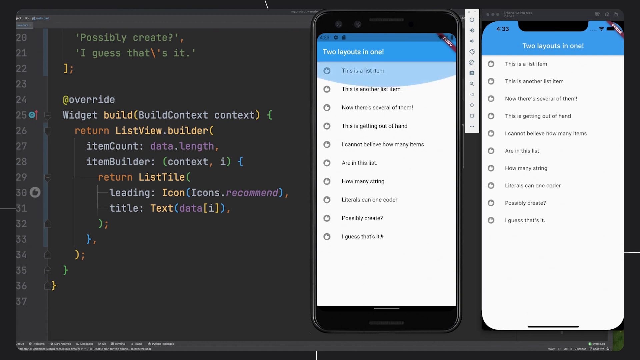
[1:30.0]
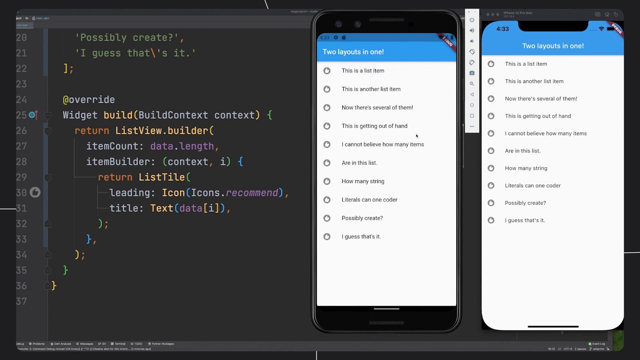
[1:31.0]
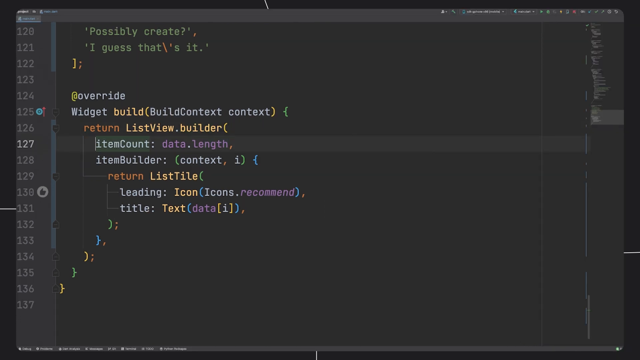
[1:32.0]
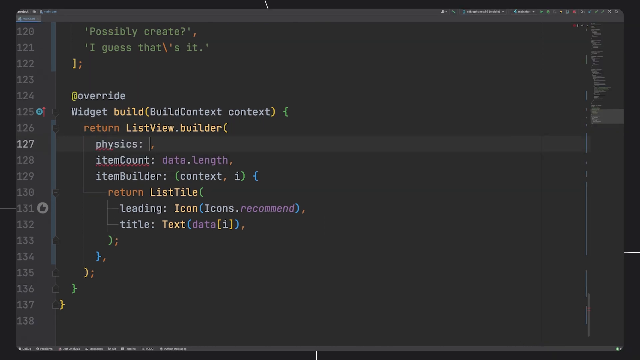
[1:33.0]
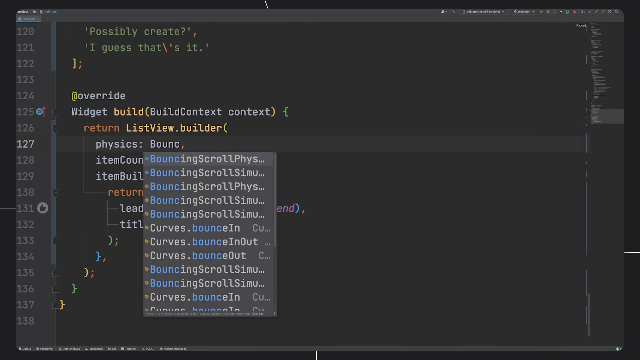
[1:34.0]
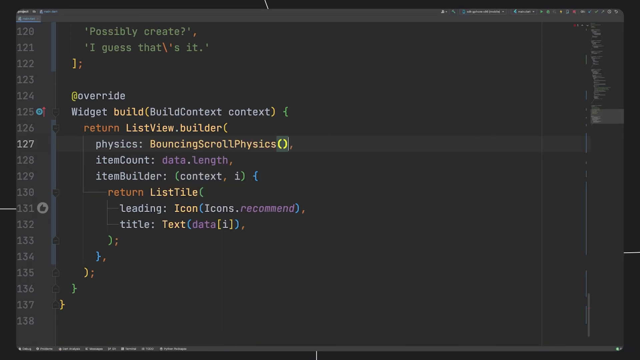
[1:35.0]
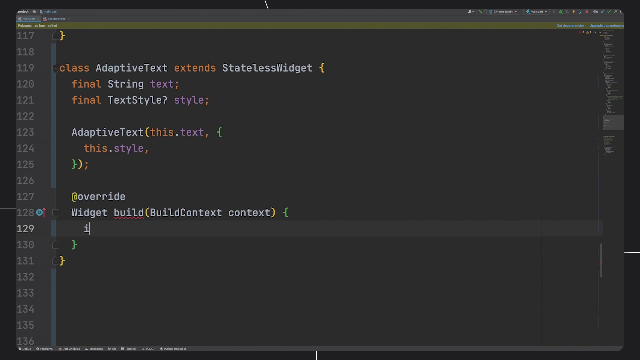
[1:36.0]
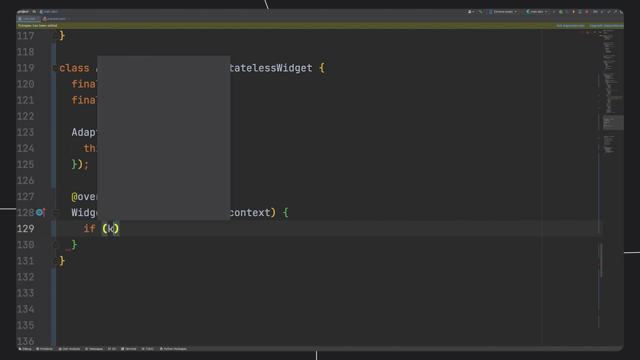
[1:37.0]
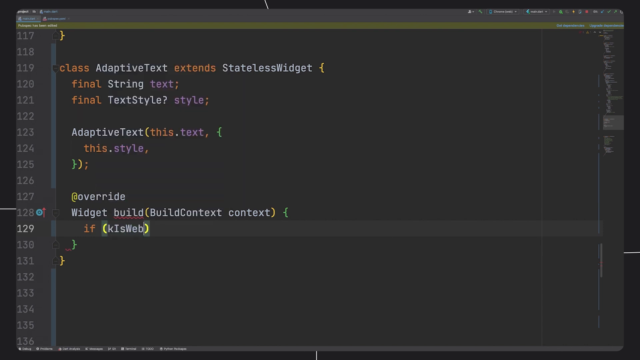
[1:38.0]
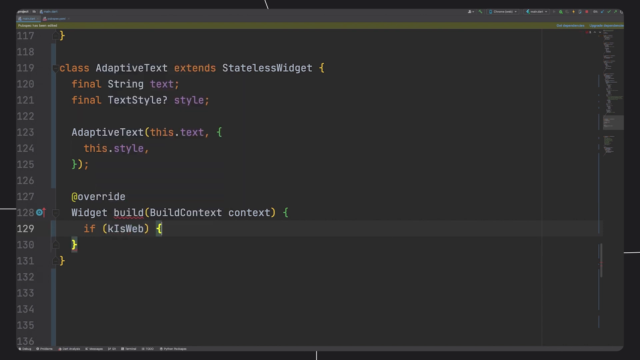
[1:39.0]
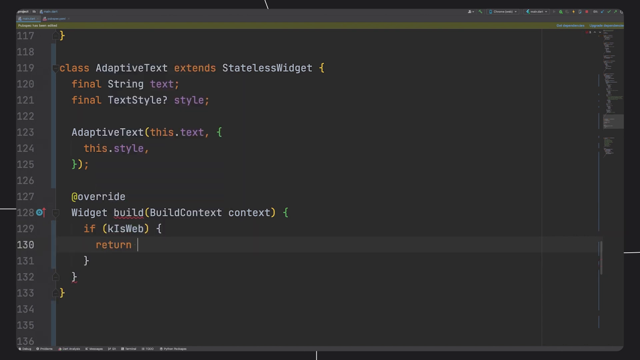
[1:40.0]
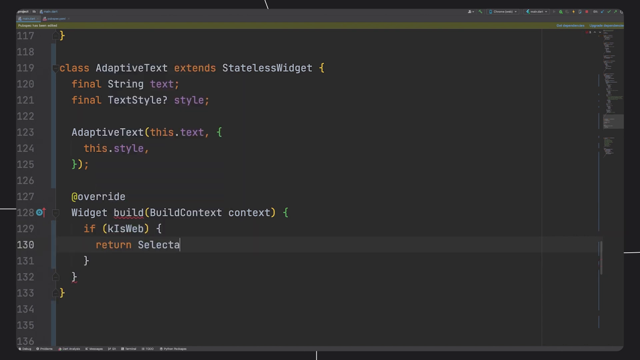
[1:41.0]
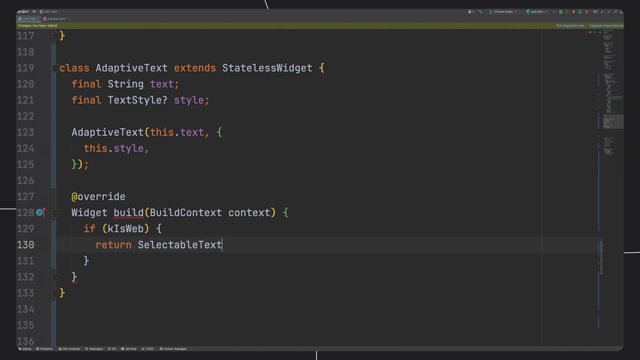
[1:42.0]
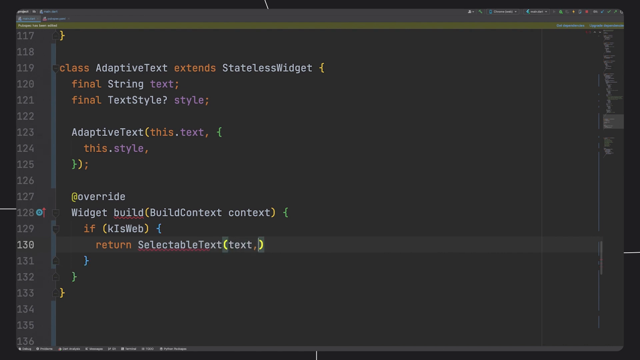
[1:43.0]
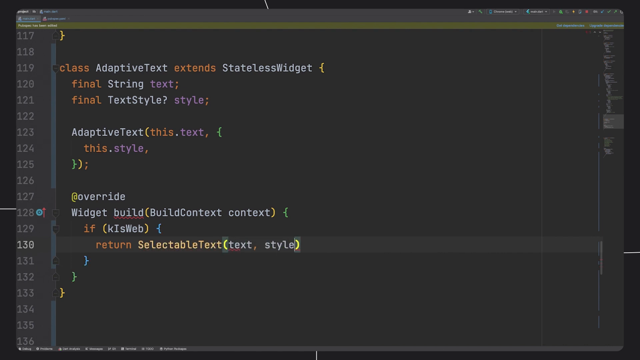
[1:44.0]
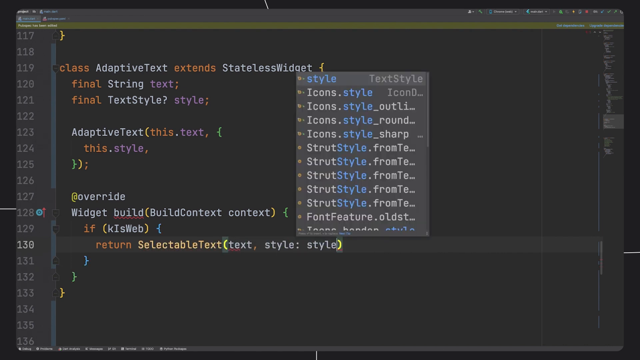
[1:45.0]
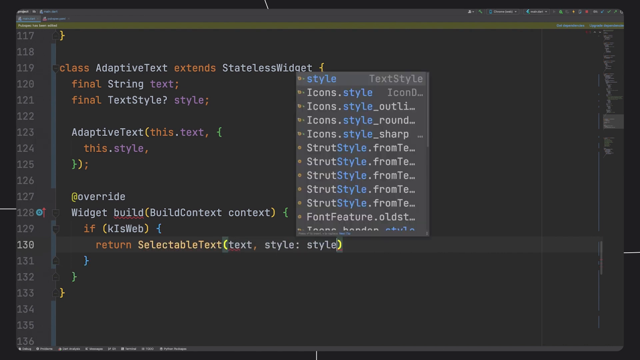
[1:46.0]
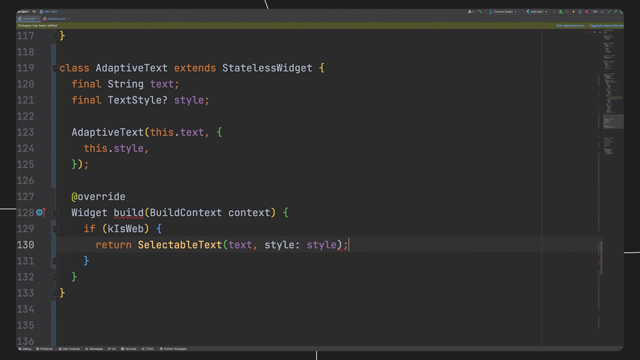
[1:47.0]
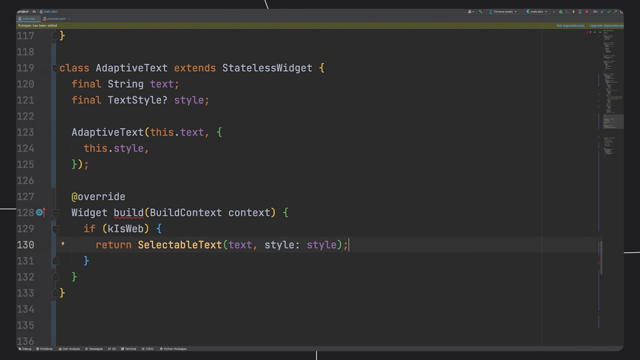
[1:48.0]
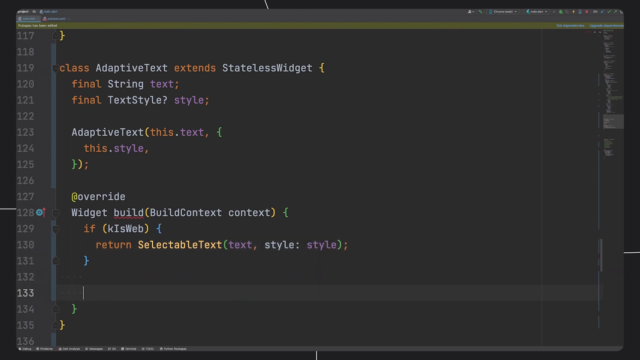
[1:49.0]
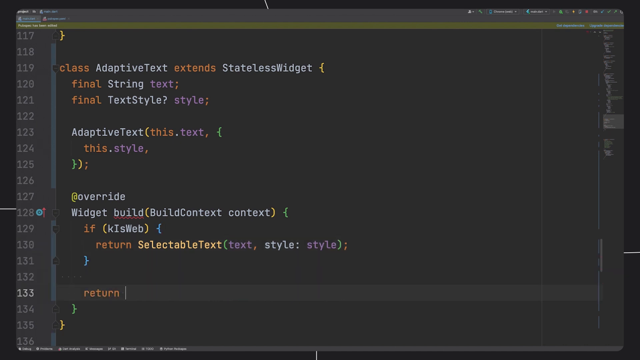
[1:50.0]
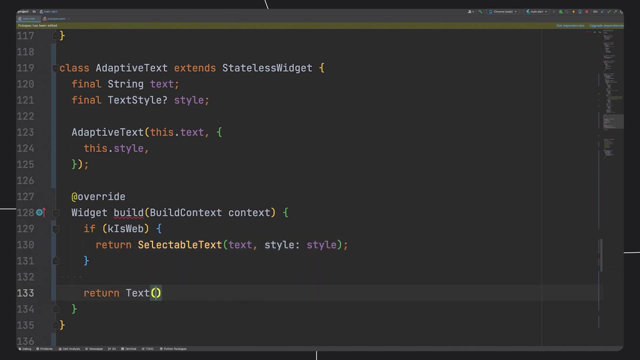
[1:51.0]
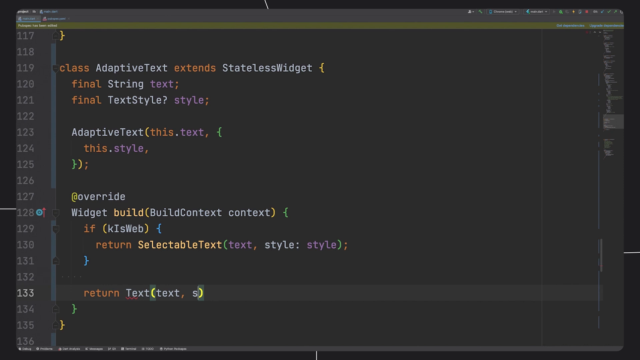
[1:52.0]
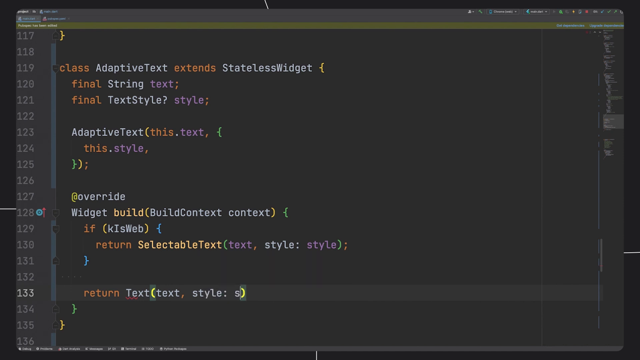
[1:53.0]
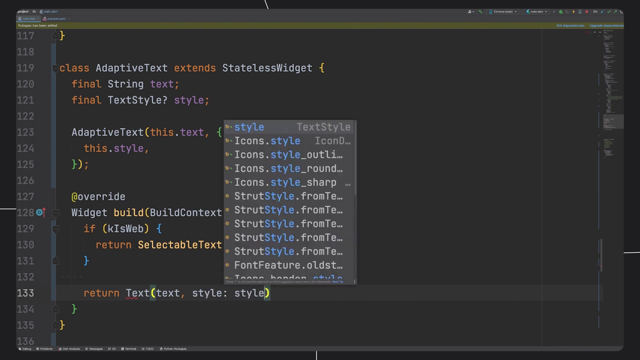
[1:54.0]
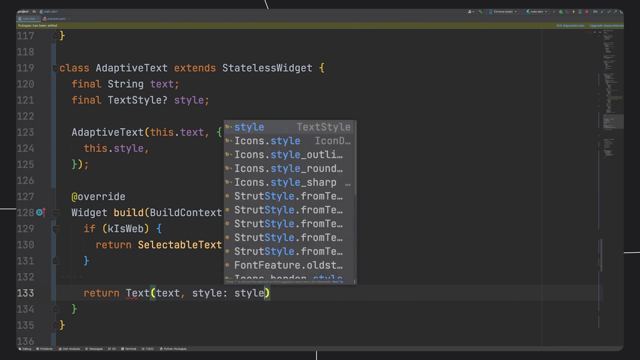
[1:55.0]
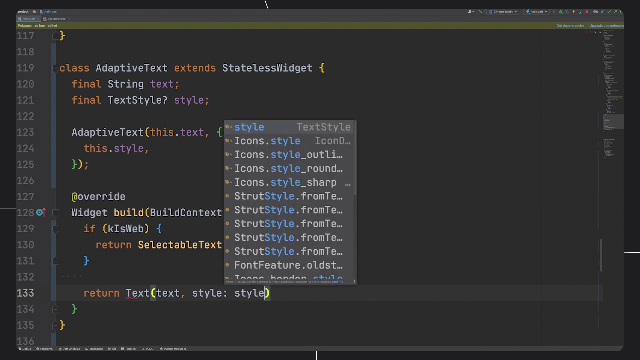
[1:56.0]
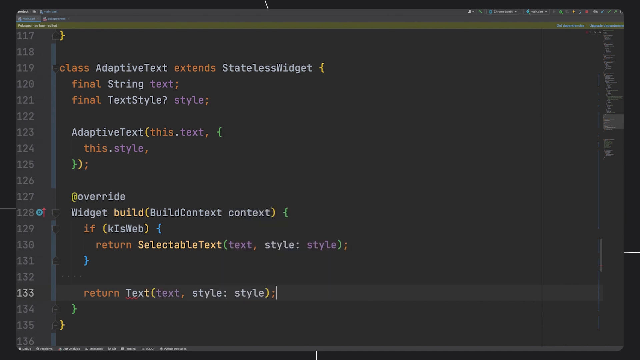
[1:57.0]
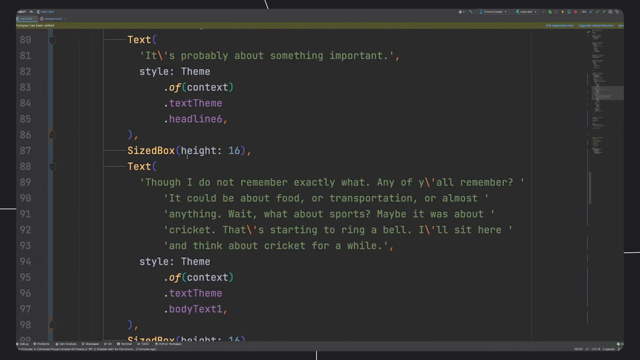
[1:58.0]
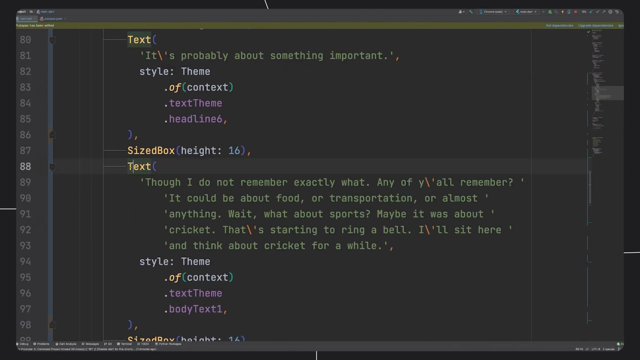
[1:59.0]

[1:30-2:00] A drop-down appears, and code is run, apparently to test whether it works. Classes are created, there is text, and there is a ListViewBuilder, which builds a list view in the application that returns text in a text style. He selects from a drop-down an already given instance of the text style, and the text adapts. The theme is shown, followed by the two layouts of the app side by side. Another drop-down with a list appears, but its words cannot be made out.